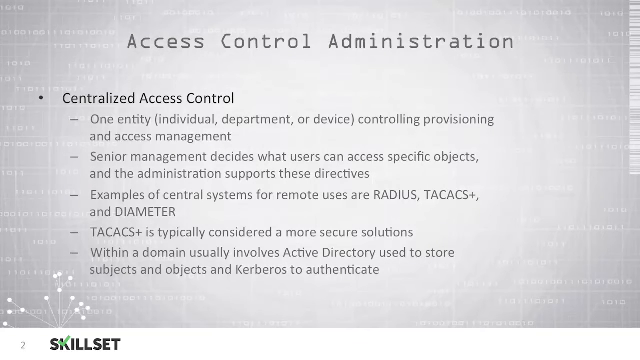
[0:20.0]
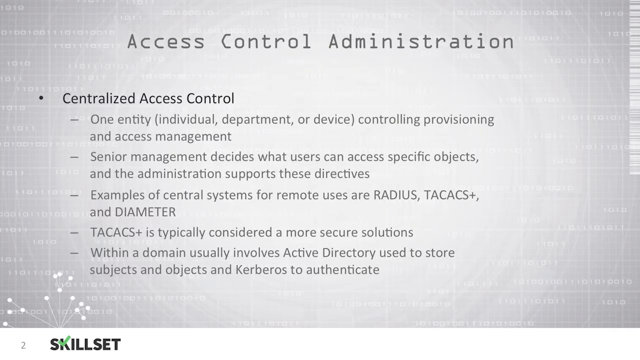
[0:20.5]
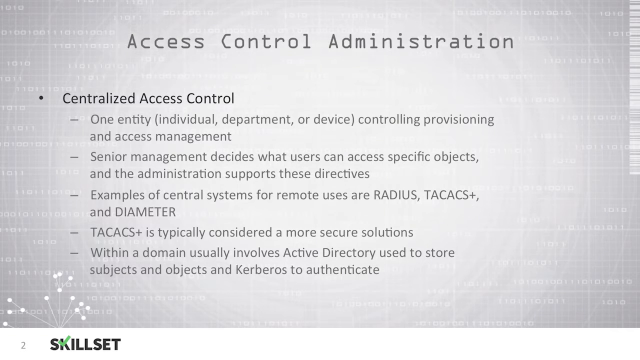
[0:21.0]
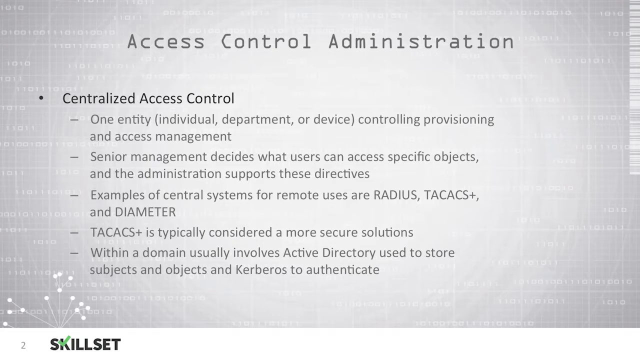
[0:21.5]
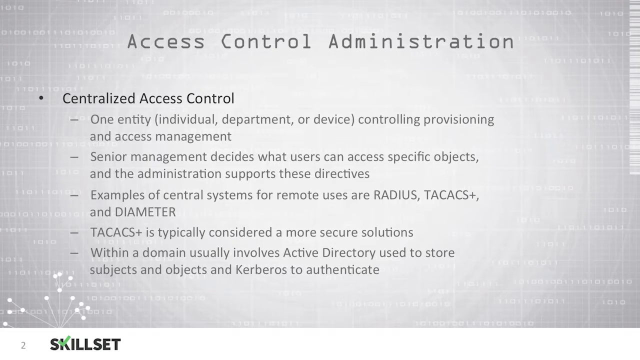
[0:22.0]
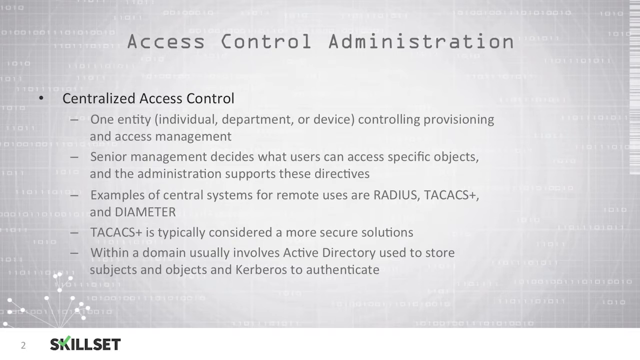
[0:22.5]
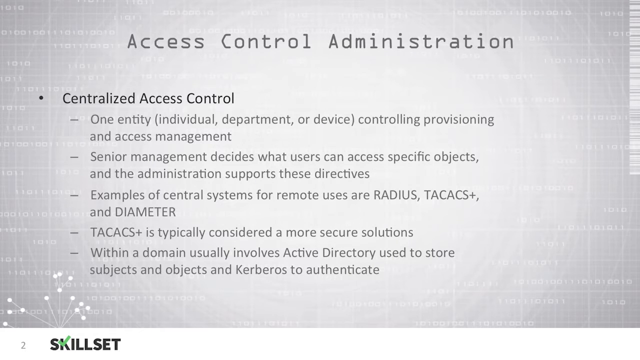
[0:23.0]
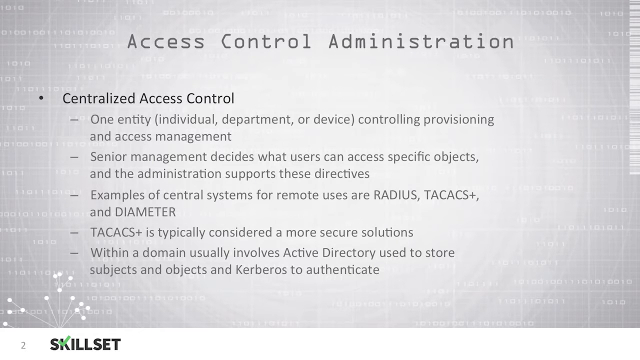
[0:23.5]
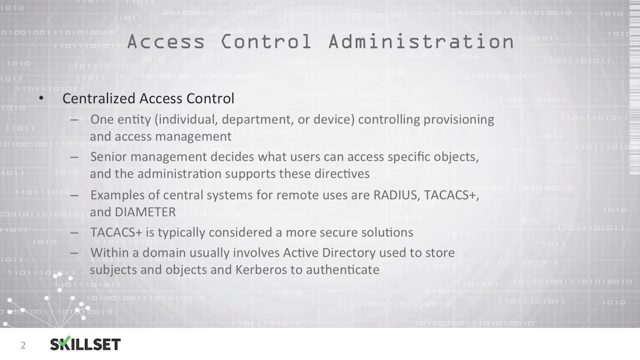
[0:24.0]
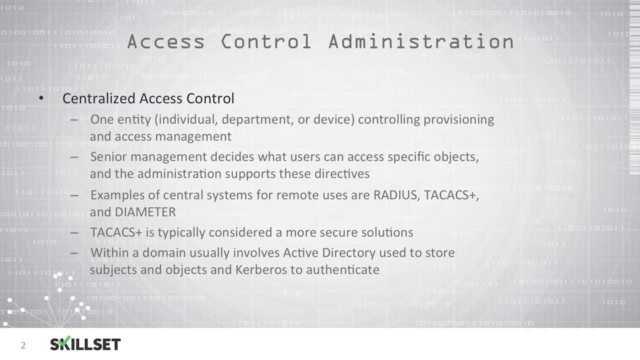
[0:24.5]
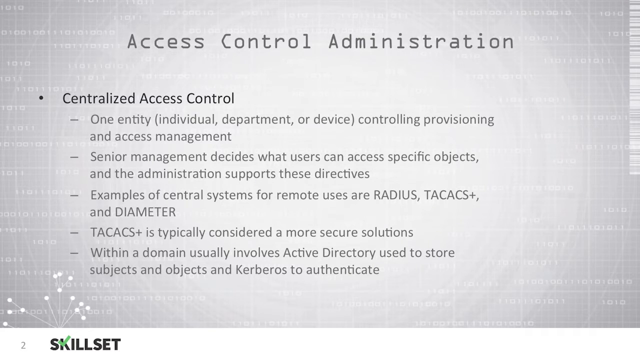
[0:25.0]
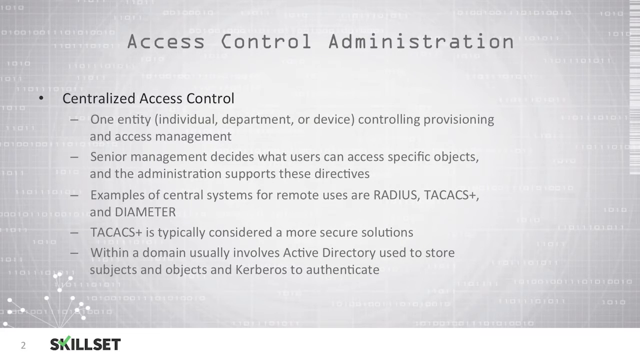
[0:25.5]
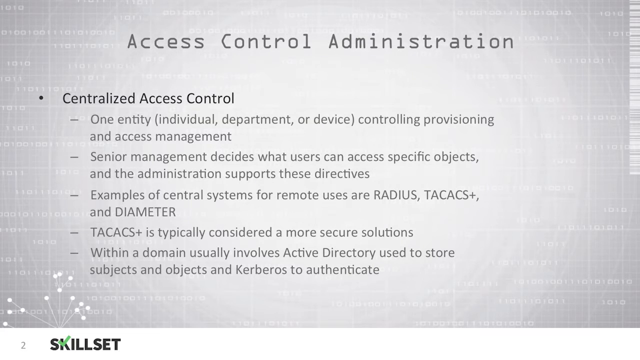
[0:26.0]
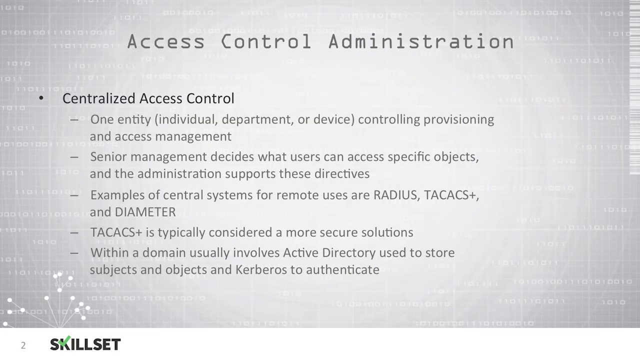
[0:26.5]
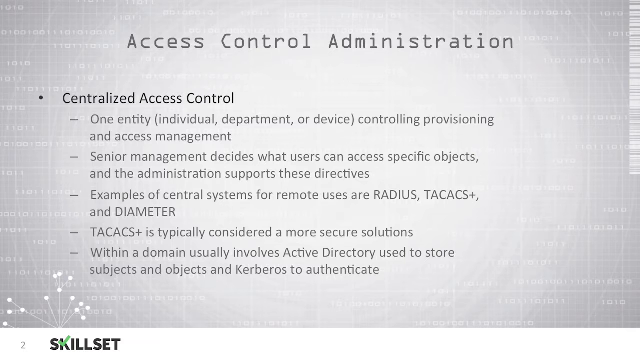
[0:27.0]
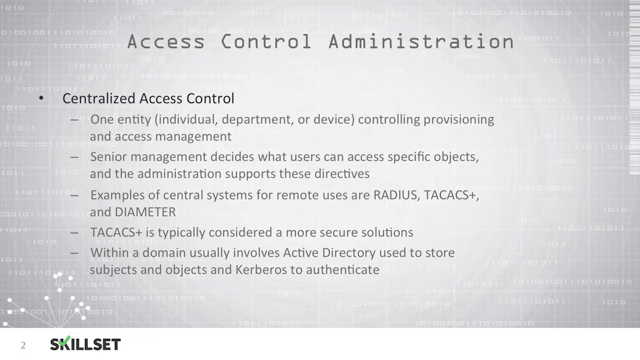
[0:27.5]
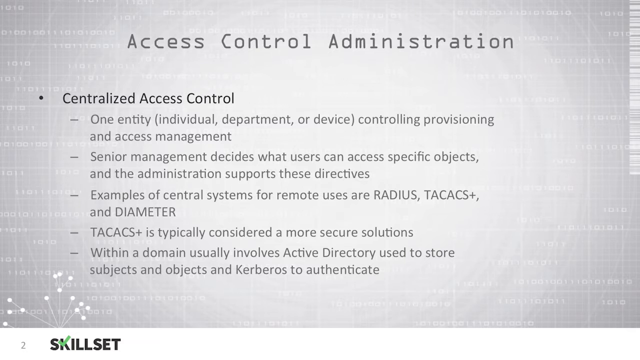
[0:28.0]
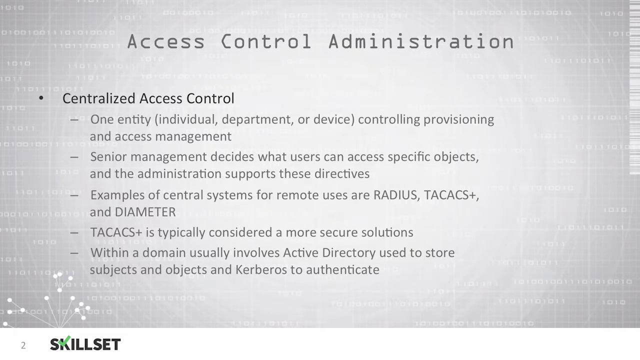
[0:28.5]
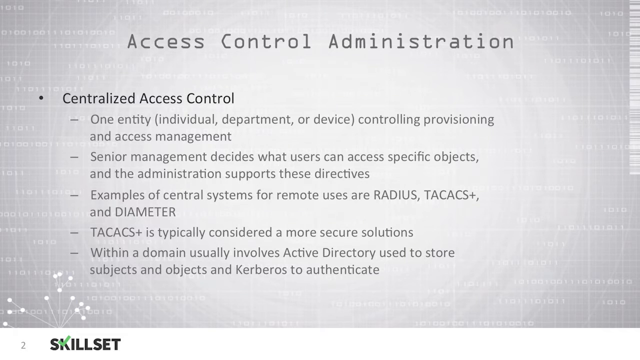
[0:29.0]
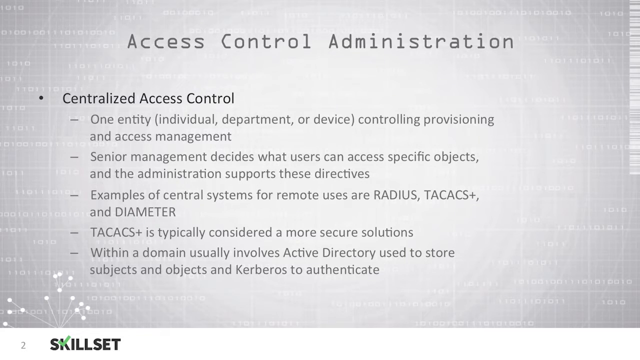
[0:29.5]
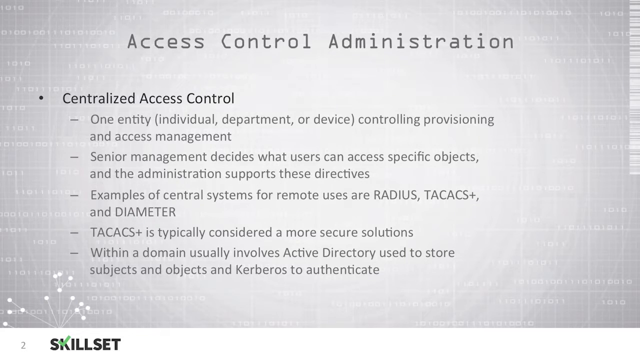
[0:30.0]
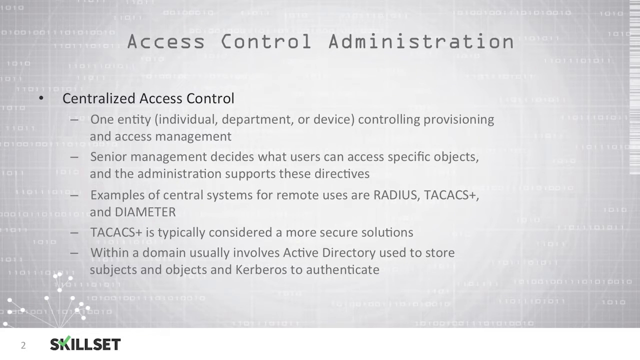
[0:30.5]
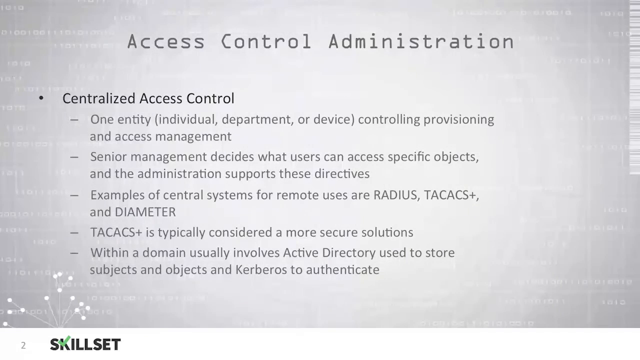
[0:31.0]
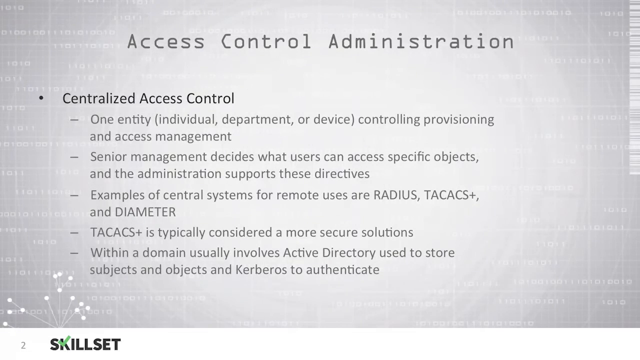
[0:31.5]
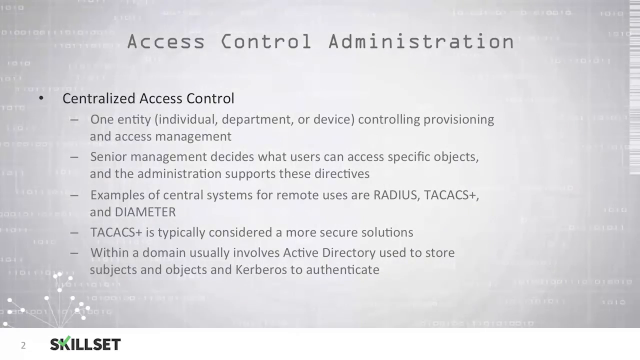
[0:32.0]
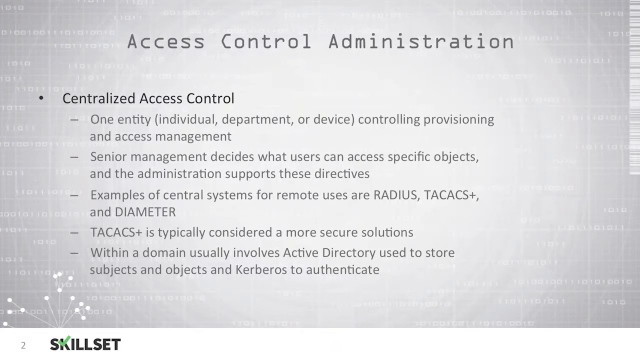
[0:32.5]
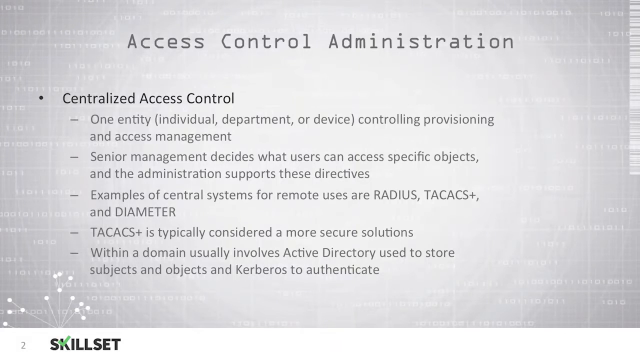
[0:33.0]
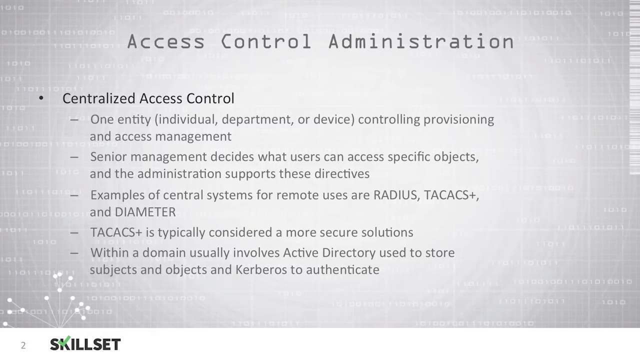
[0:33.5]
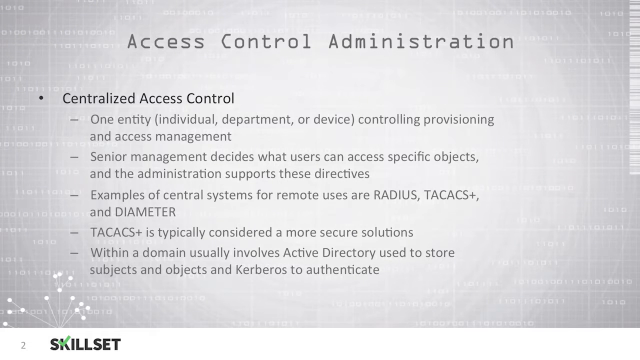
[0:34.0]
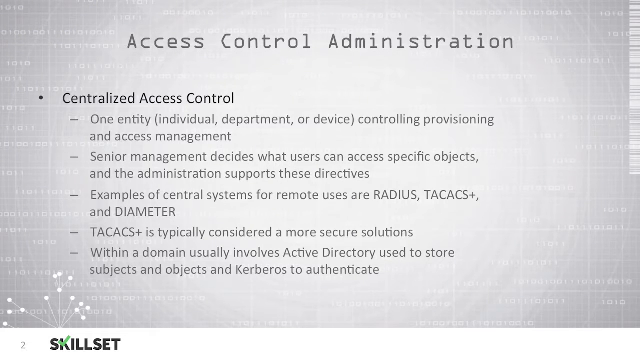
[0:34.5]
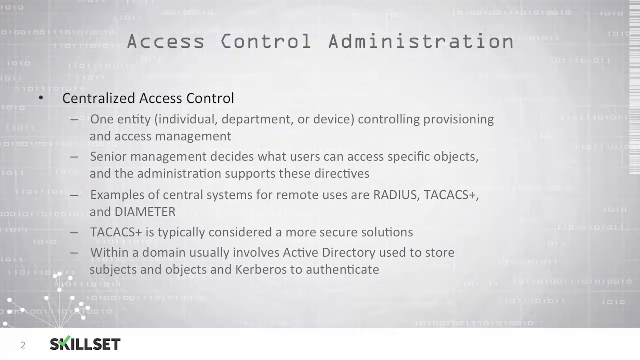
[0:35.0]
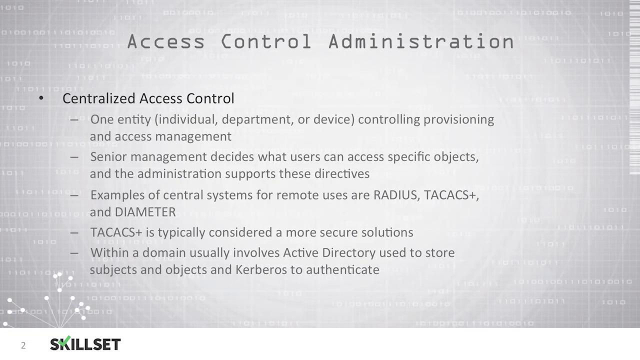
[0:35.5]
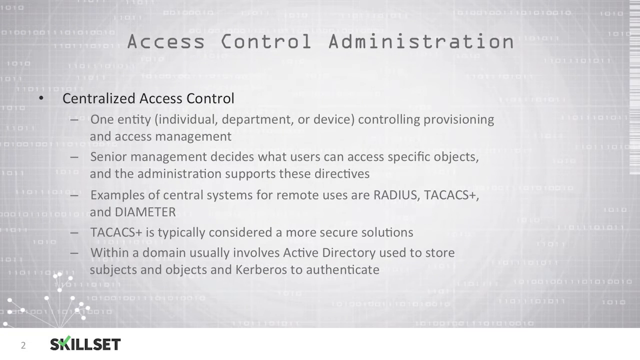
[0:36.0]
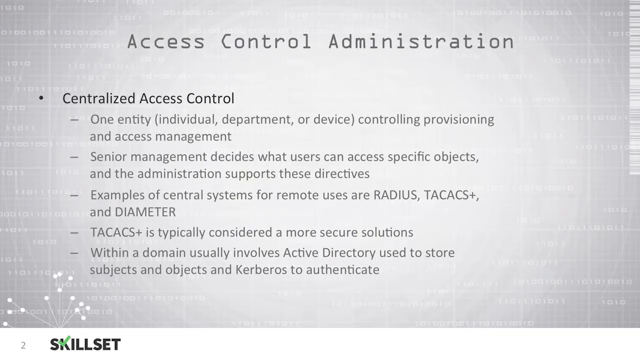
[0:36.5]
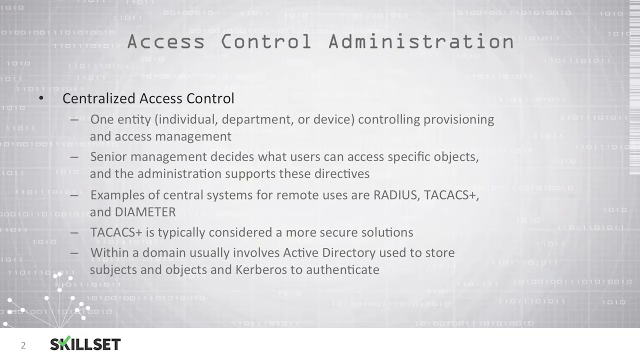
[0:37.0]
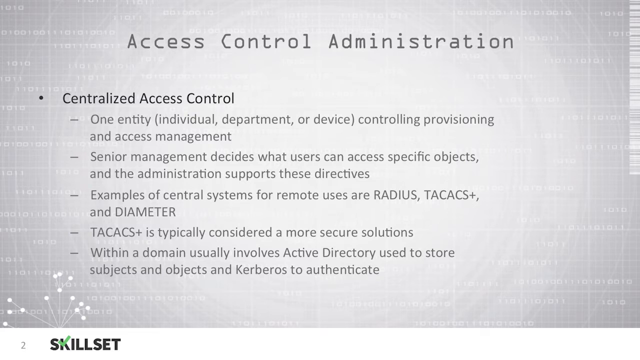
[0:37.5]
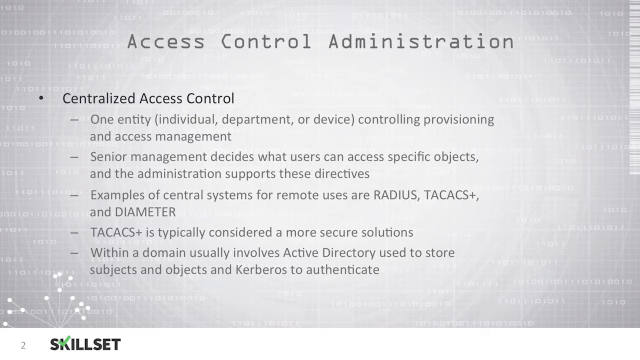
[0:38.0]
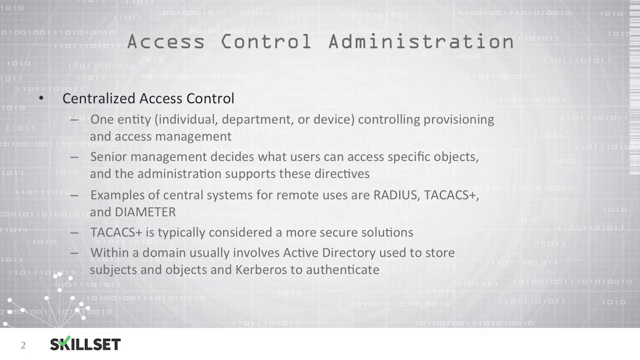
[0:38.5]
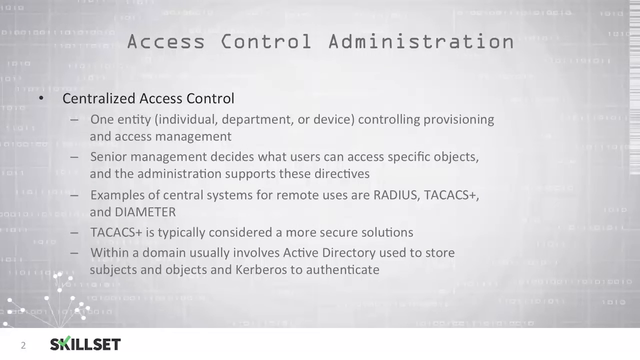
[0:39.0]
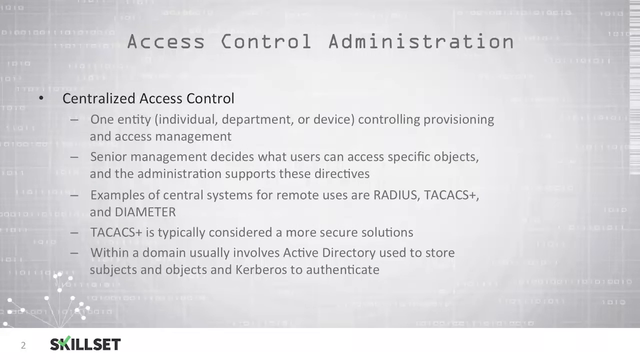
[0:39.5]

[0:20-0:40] The slide shows "Access Control Administration" at the top and the topic "Centralized Access Control", followed by supporting bullets: "one entity (individual, department, or device) controlling, provisioning, and access management"; "senior management decides what users can access specific objects, and the administration supports these directives"; "examples of central systems for remote users are Radius, TACACS+, and Diameter", with those three terms in all caps; "TACACS+ is typically considered in more secure solutions"; and "within a domain, usually involves Active Directory, used to store subjects and objects, and Kerberos to authenticate". The background is a white gradient with a slight data-style pattern toward the outsides. Small wording in the bottom left corner reads "skill set" along with the number two, marking page two.